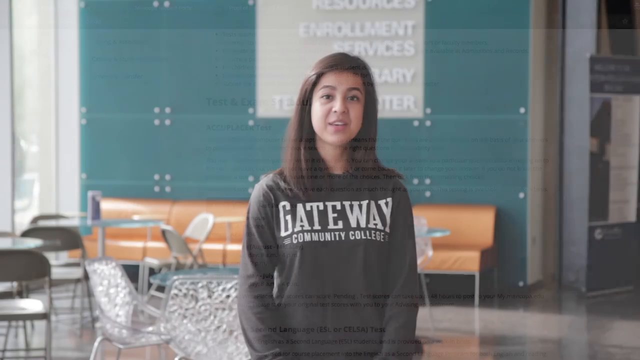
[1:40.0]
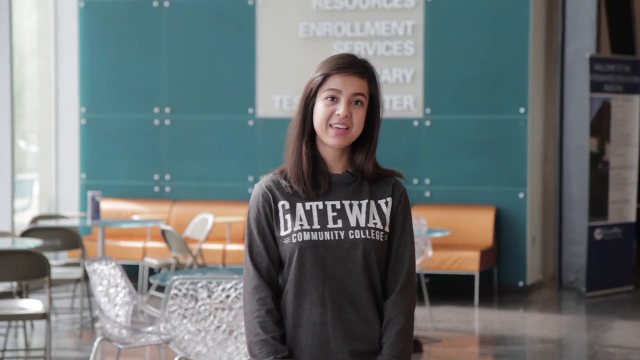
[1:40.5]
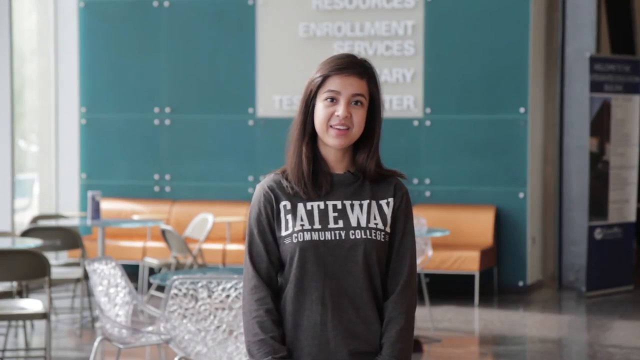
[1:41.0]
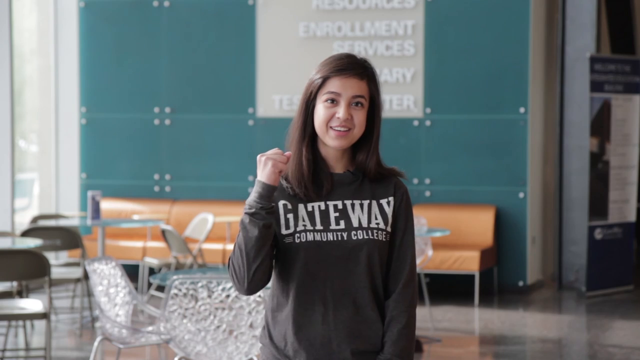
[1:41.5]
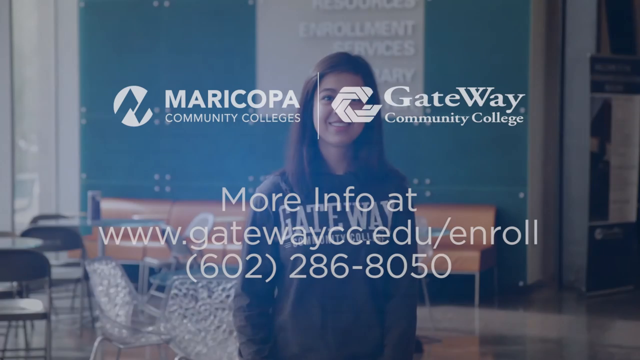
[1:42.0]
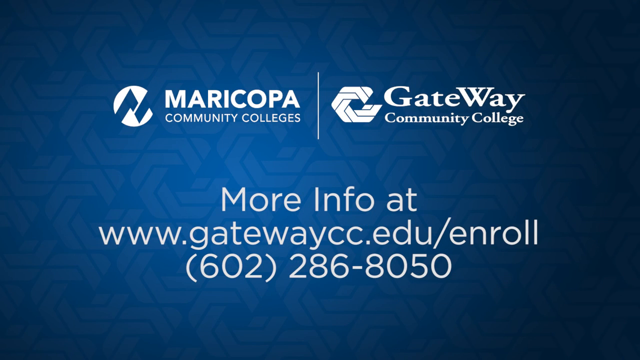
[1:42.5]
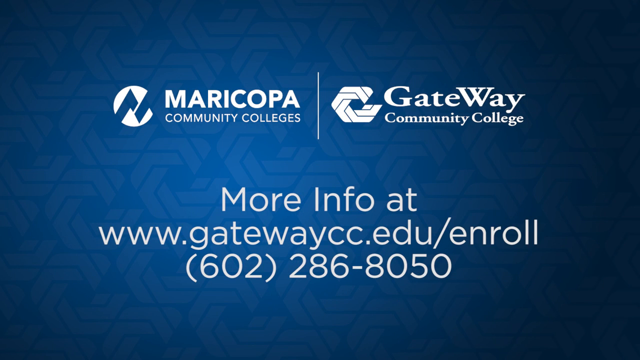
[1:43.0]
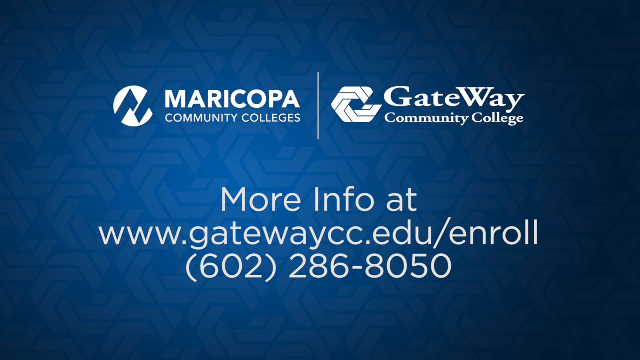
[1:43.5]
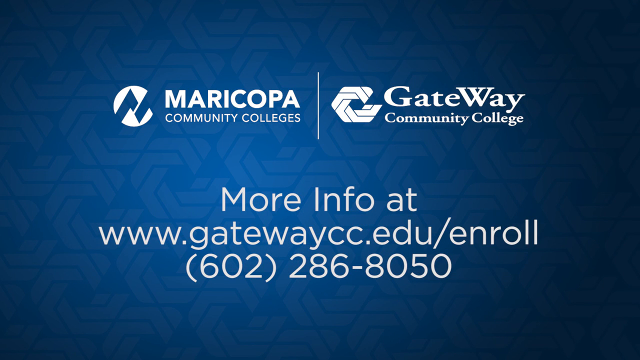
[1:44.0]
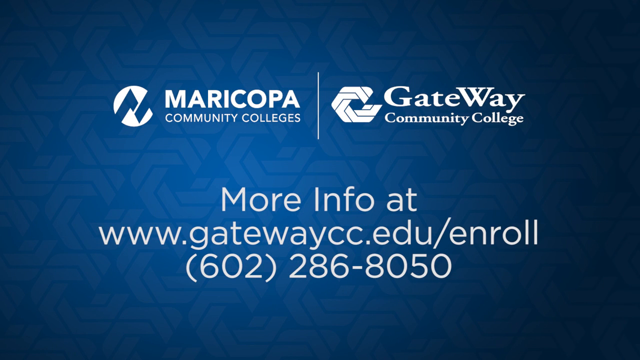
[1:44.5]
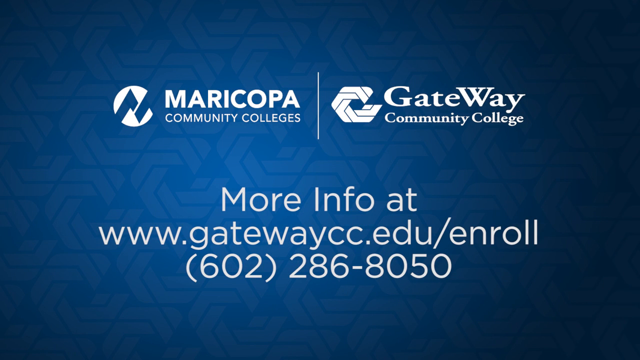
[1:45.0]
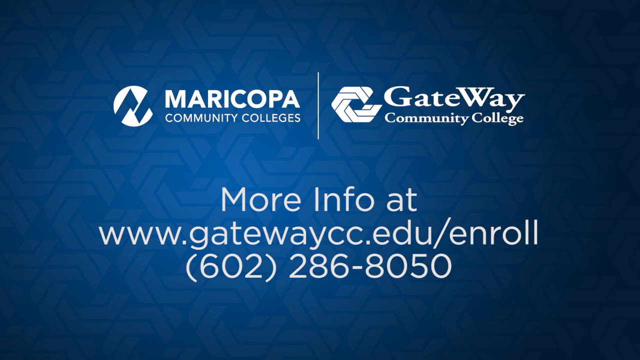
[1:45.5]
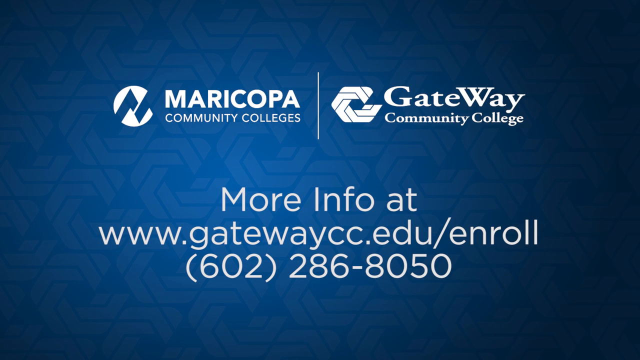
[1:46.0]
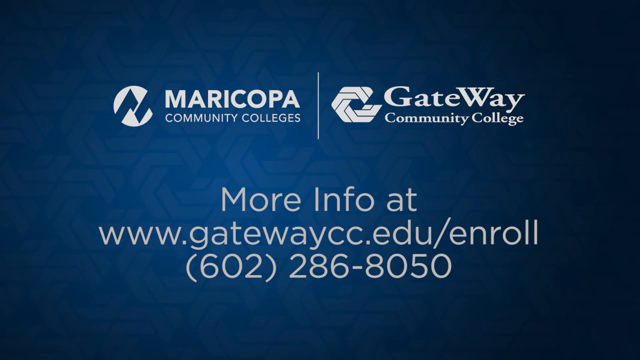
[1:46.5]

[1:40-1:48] A woman with dark hair wears a black hoodie with "gateway community college" written in white on it. Behind her is a blue wall and an orange coat, and there is also a table and chairs. To the left is a window. Behind her is also a silver plaque that says "enrollment services". The video then goes to a blue screen showing the Maricopa Community College logo in white and the Gateway Community College logo in white, followed by a URL for enrolling at the college and a phone number for calling the college.